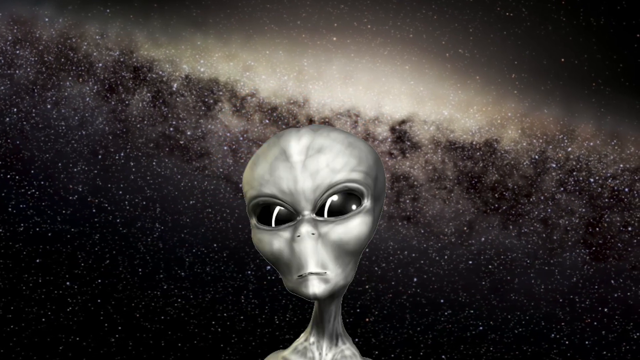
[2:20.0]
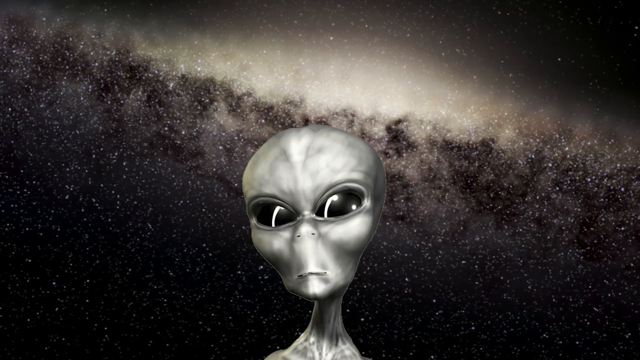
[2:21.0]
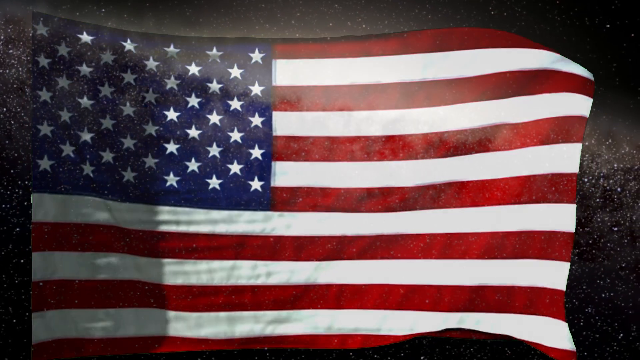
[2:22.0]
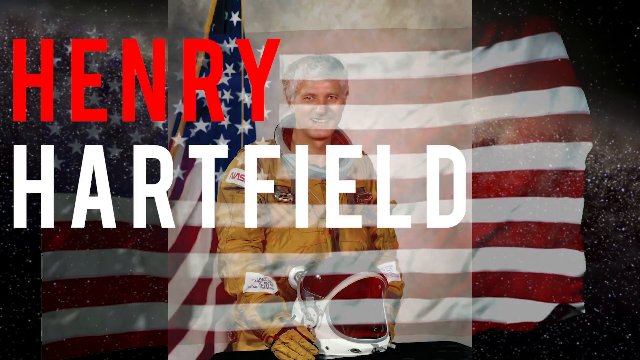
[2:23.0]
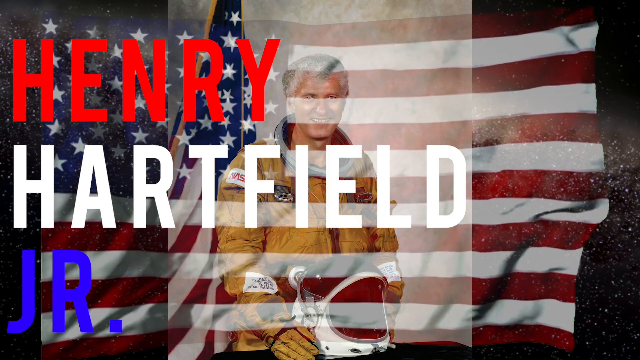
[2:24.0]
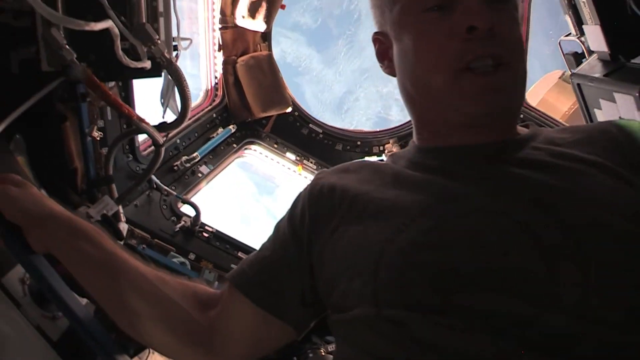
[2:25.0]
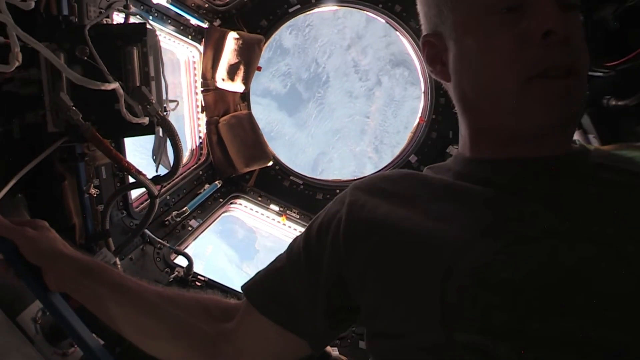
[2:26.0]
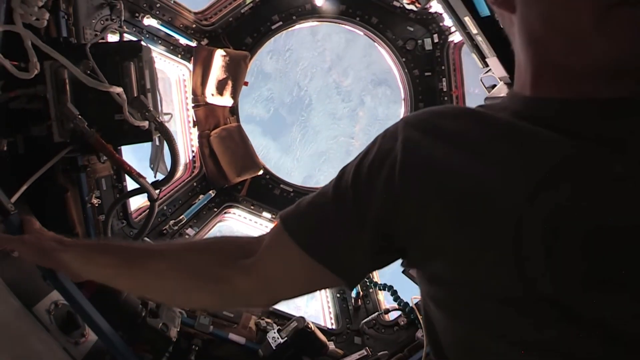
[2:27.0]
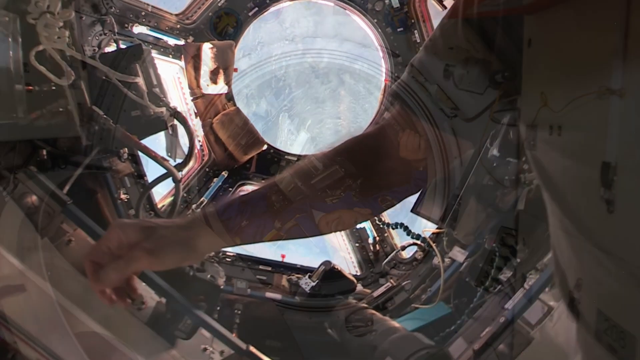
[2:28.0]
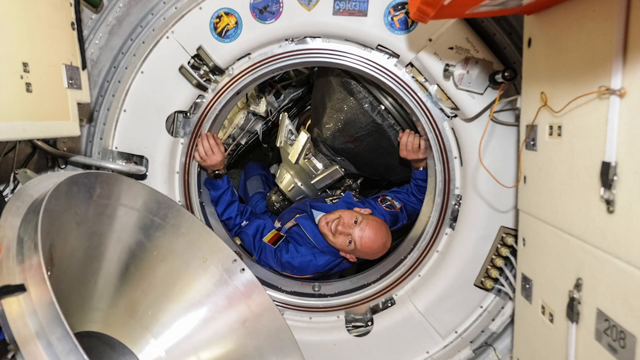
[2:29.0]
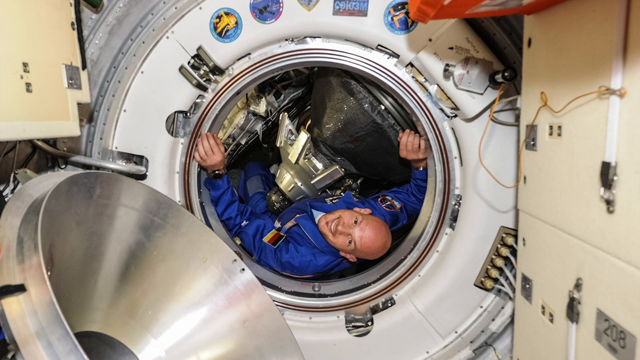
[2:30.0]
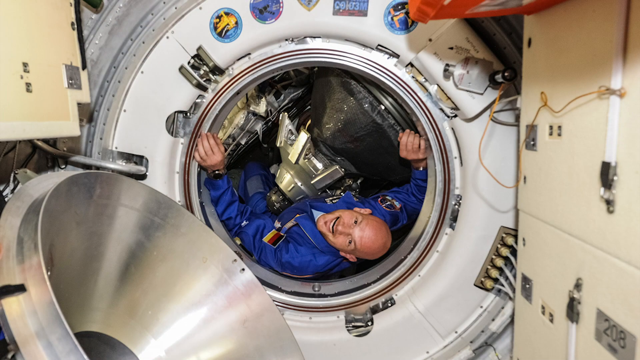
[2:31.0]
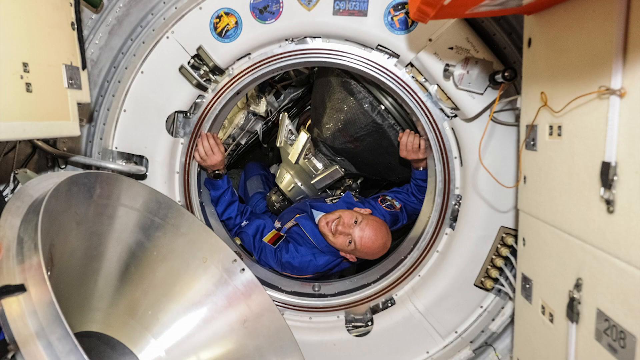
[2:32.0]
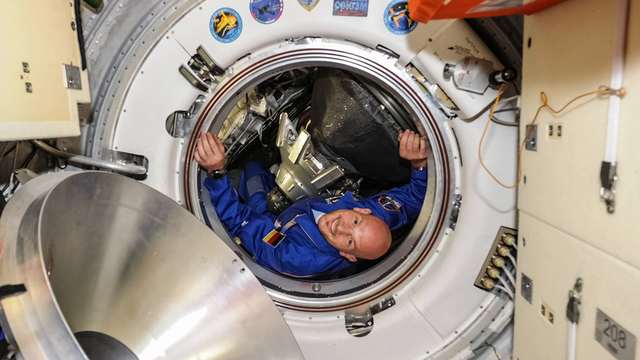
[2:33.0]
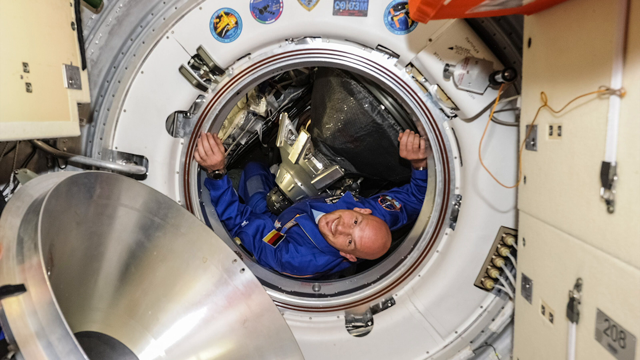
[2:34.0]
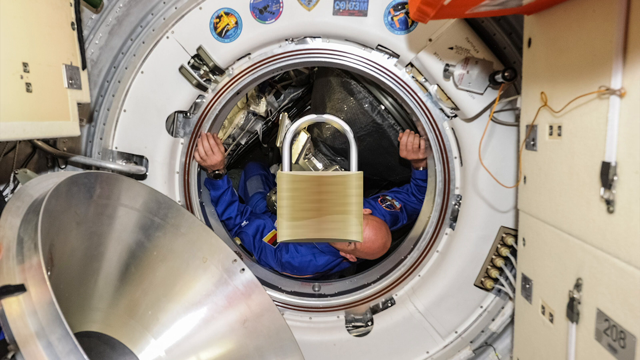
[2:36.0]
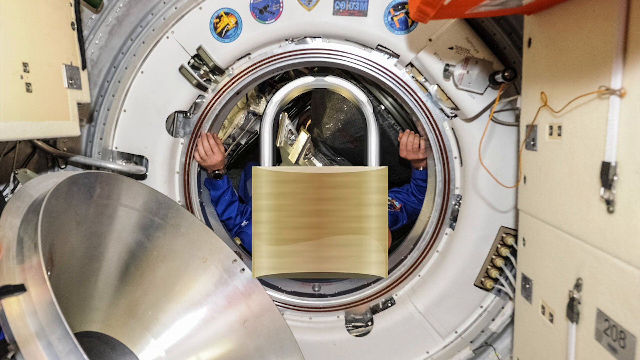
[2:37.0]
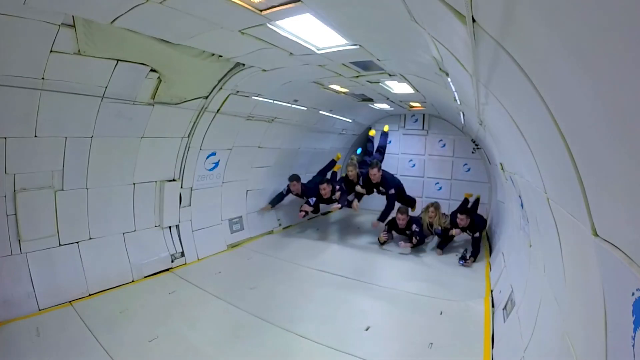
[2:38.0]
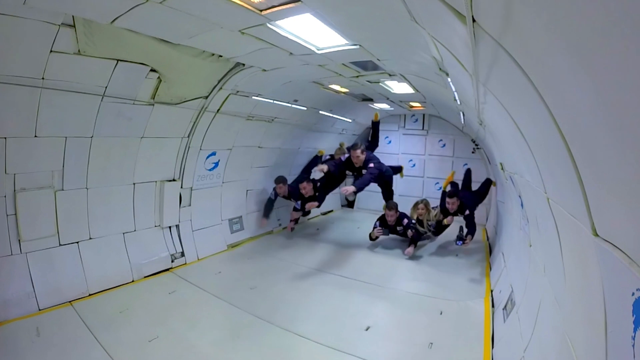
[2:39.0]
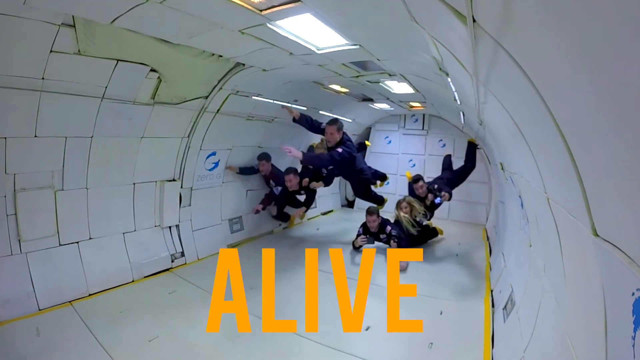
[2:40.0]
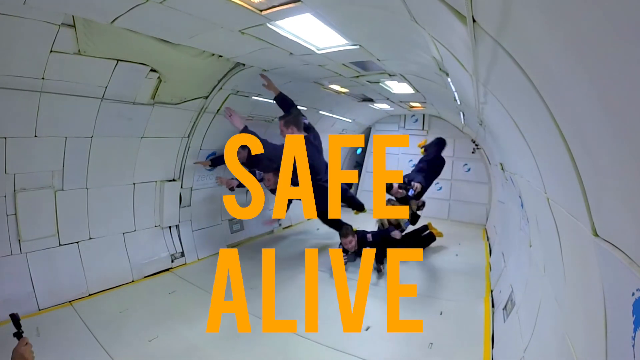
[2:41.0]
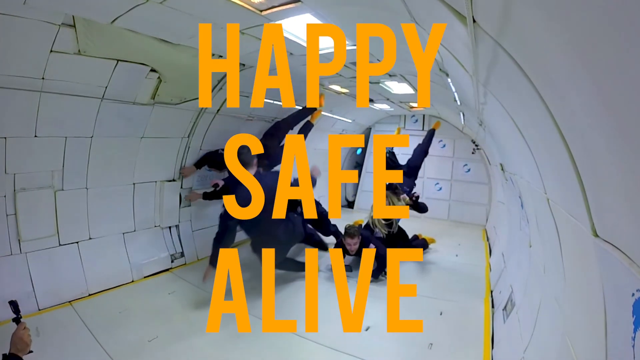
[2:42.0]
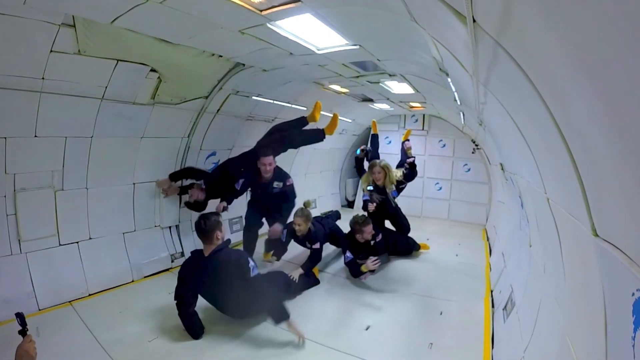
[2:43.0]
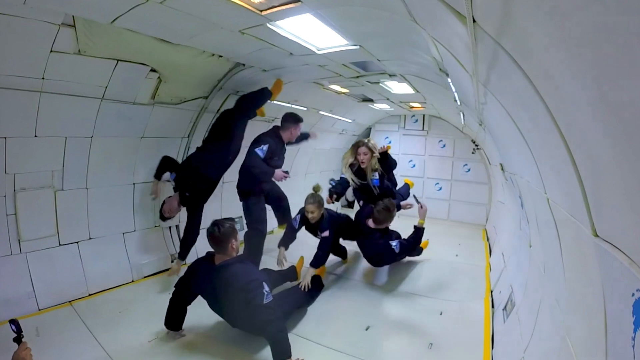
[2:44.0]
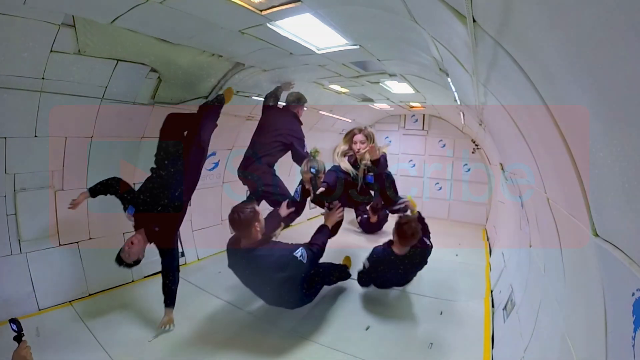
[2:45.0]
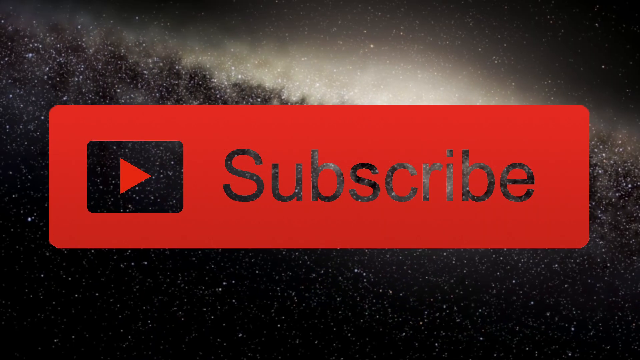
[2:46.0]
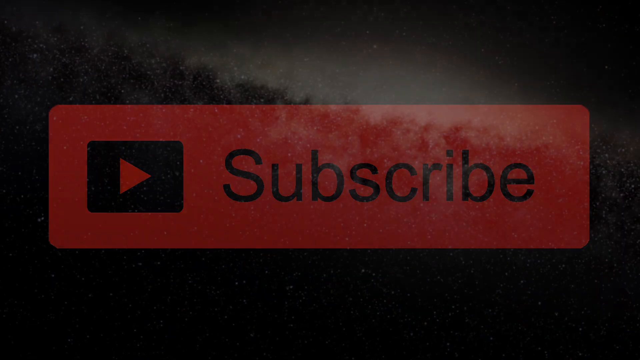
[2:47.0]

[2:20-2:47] A light gray alien with large black eyes is in the center, looking at the viewer. An image of an American flag appears and fades, revealing a man, an astronaut, posing for a photo in a yellow astronaut suit and holding a helmet. His name is presented very large on the left side: "Henry Hartfield jr." The scene changes to a man inside a space station, on the right side. The scene changes again to a man in a very tight area of a space station, looking through a circular opening. He is upside down and smiling, looking directly at the viewer, and an effect makes his mouth move very fast while the rest of the picture stays still. An image of a padlock appears in the middle. A different scene shows what looks like training for people who want to go into space: people wearing dark blue jumpsuits float, suspended in zero gravity, inside a small area. The word "alive" appears at the bottom, "safe" in the middle and "happy" on top. The words disappear and the people keep floating; they wear yellow socks, and there is an equal mix of men and women. Finally, a large red Subscribe button appears with an image of outer space in the background.